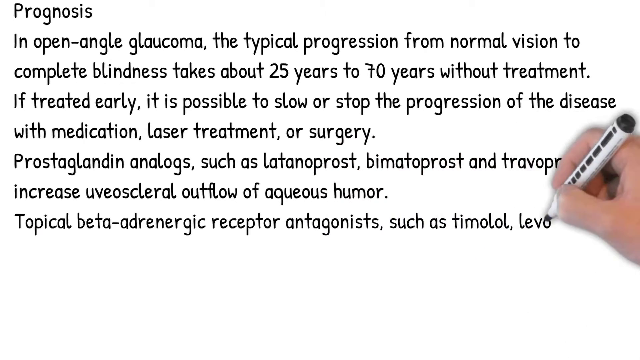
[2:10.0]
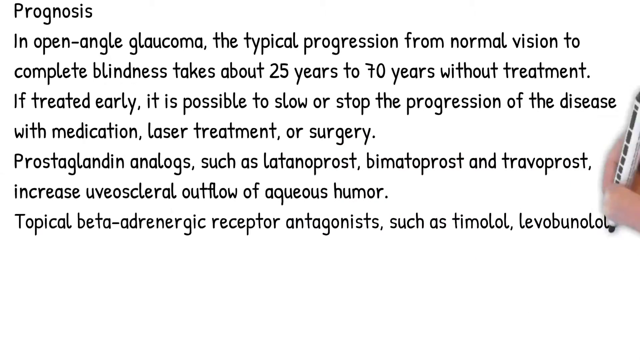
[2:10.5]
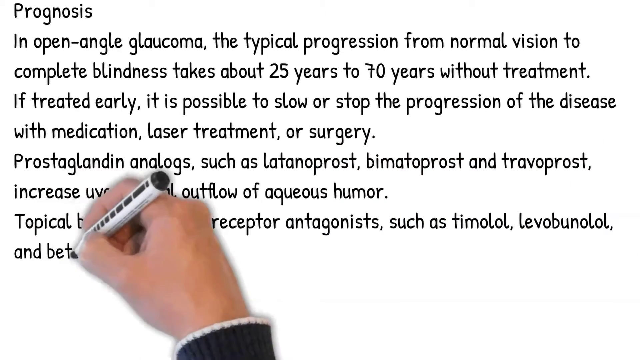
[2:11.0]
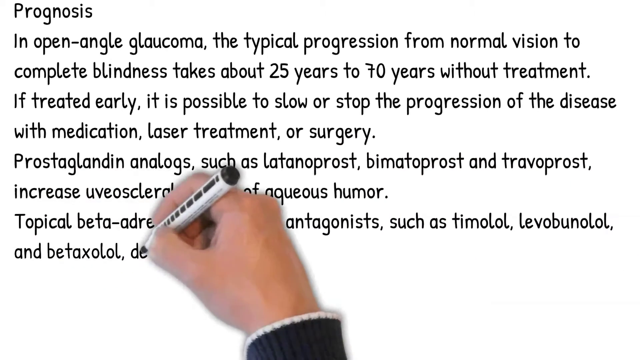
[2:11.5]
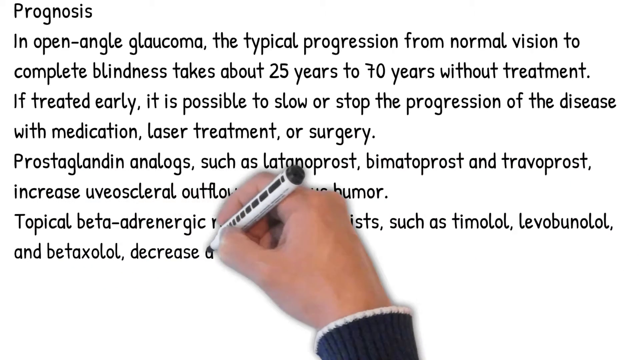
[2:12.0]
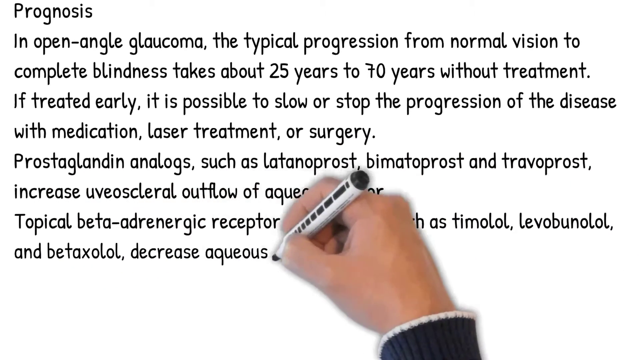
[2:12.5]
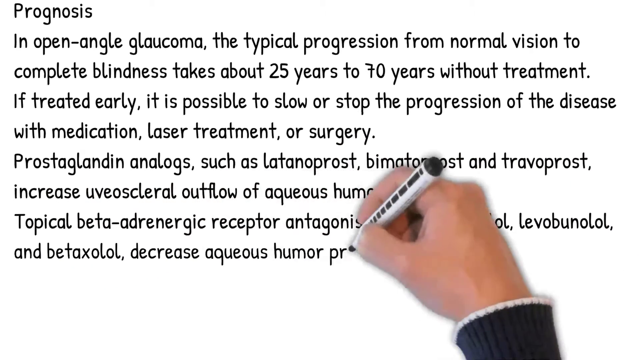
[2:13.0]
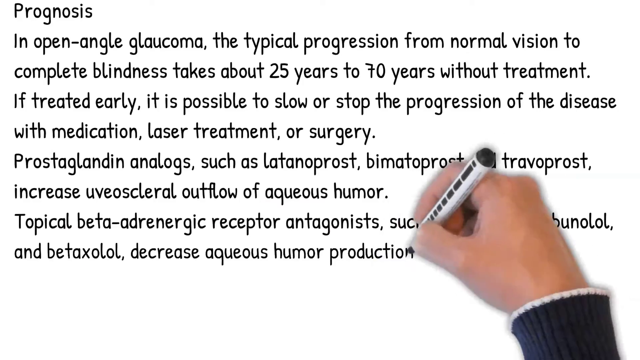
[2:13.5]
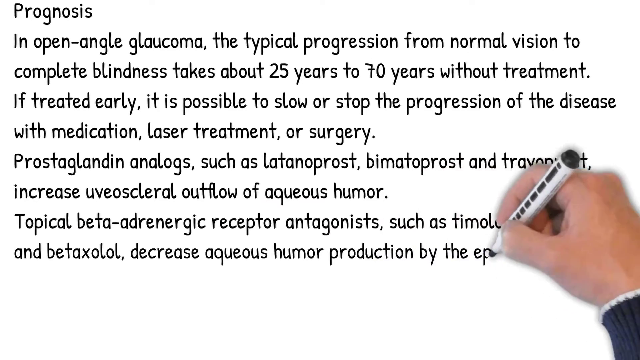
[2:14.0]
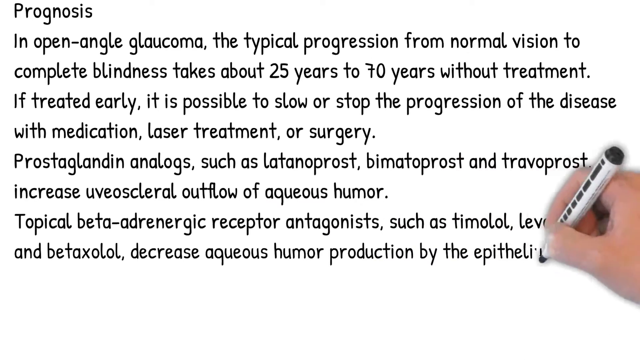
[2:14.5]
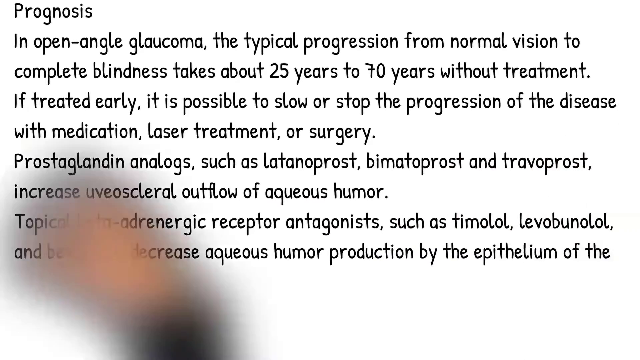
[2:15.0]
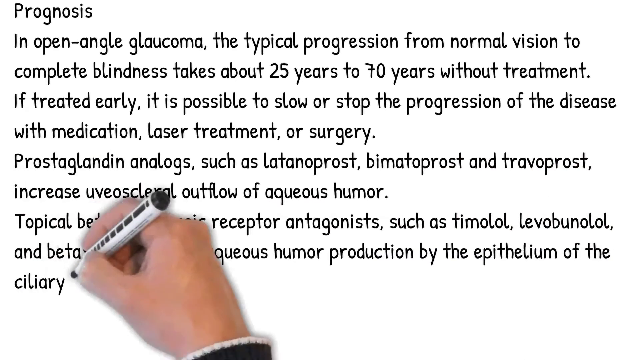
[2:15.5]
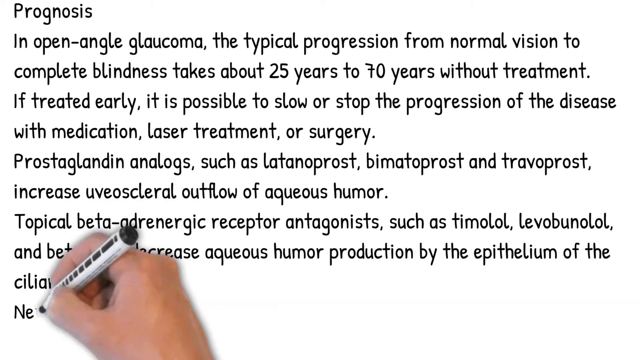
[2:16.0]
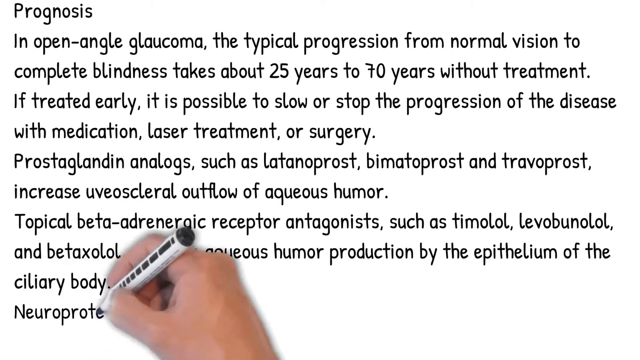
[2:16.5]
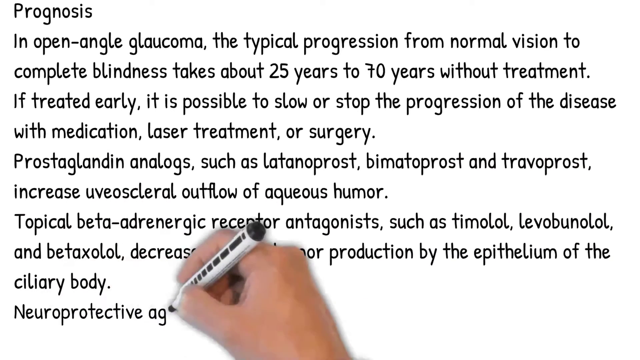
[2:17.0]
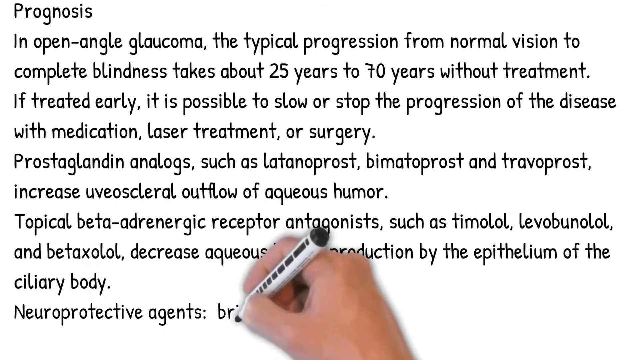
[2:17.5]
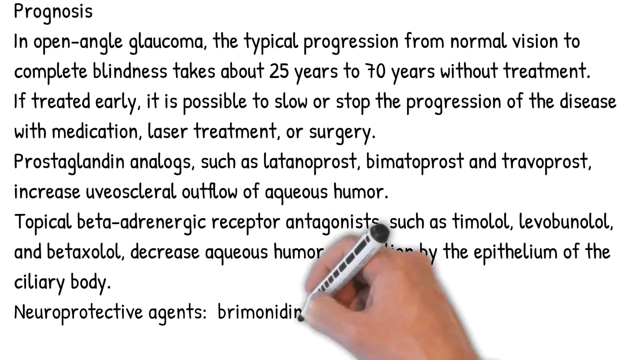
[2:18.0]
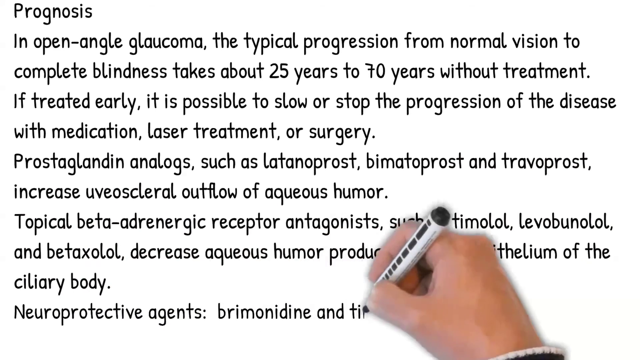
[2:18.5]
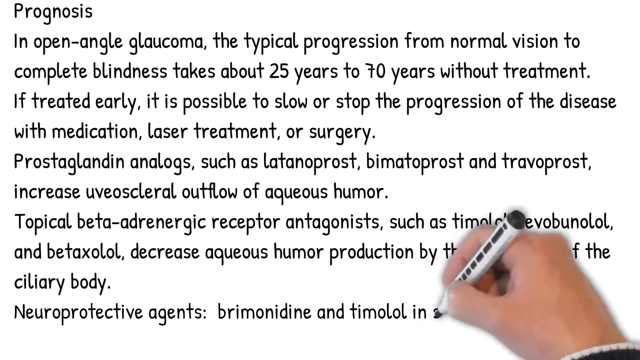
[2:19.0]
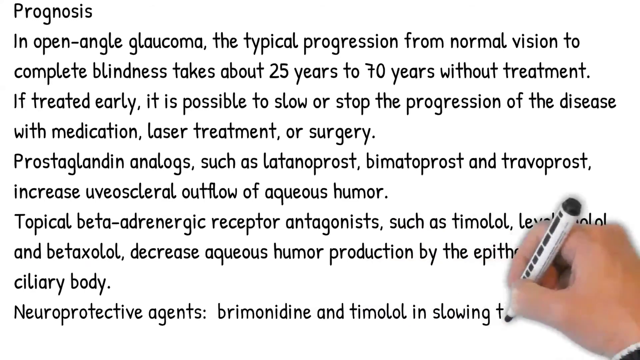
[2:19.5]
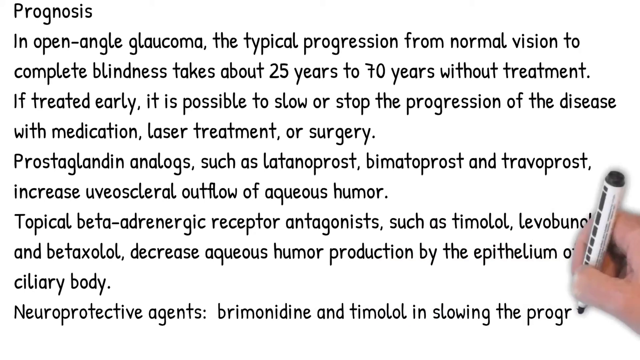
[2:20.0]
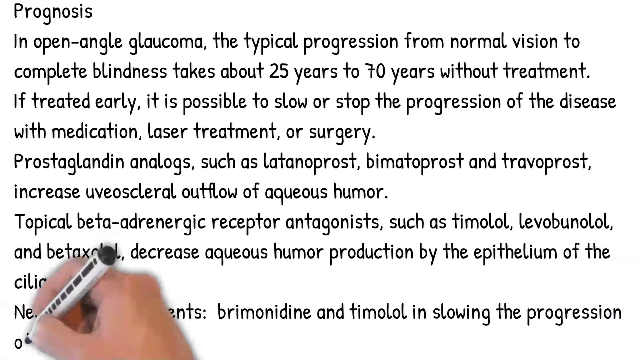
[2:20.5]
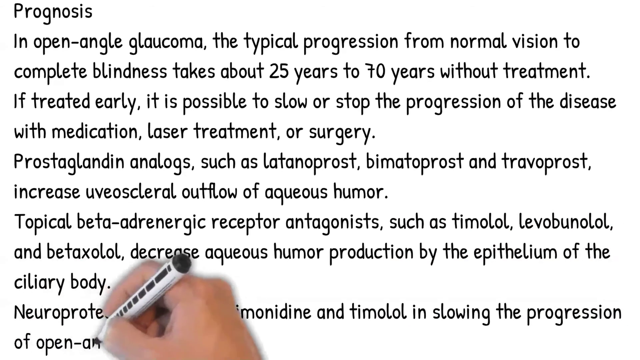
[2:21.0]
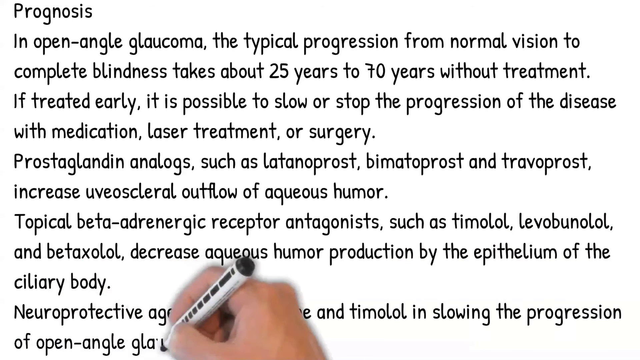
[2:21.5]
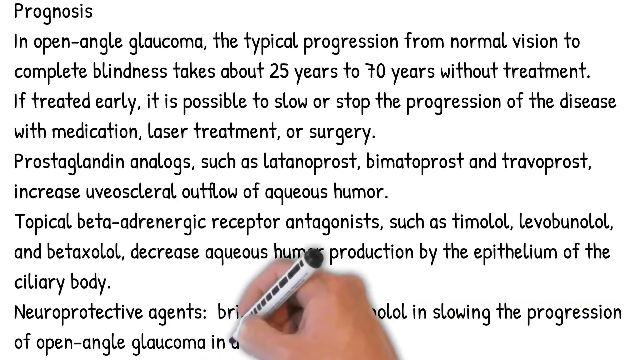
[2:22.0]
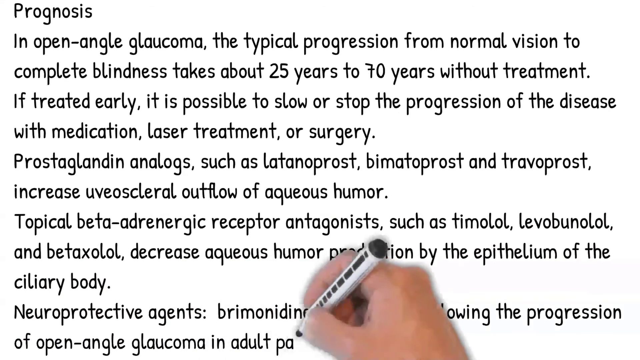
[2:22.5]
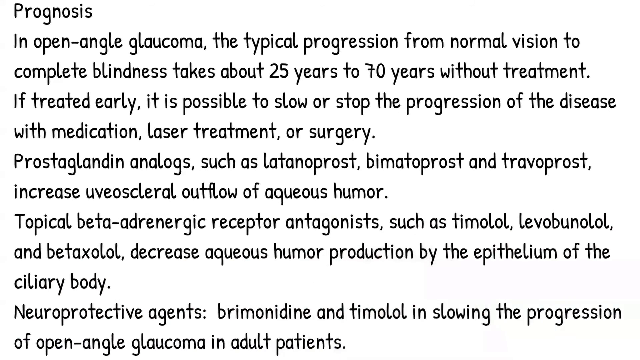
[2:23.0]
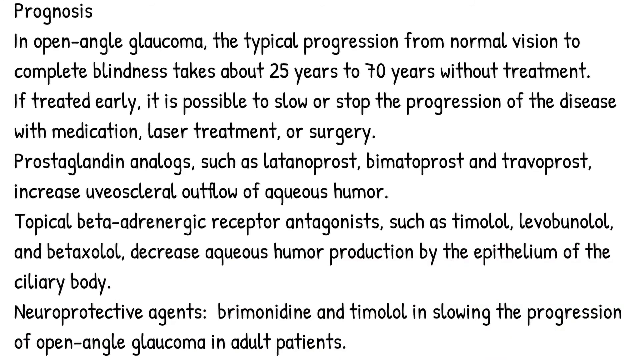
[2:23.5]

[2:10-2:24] The hand and pen continue writing near the bottom of the page, adding text about topical beta receptor antagonists that "decrease aqueous humor by the epithelium of the ciliary body", and about "Neuroprotective agents" in slowing the progression of open-angled glaucoma in adult patients. The pen finishes writing and the page is completely full. Everything is written in a black, handwriting-style font, and the page is about the prognosis for glaucoma patients. The writing is done by a white male hand with a blue sleeve with white trim, writing from left to right and filling the page with information about the prognosis.